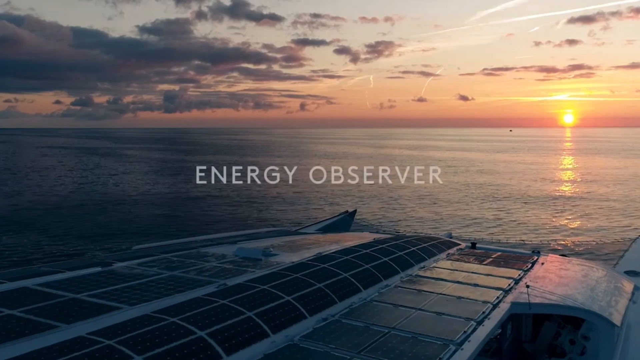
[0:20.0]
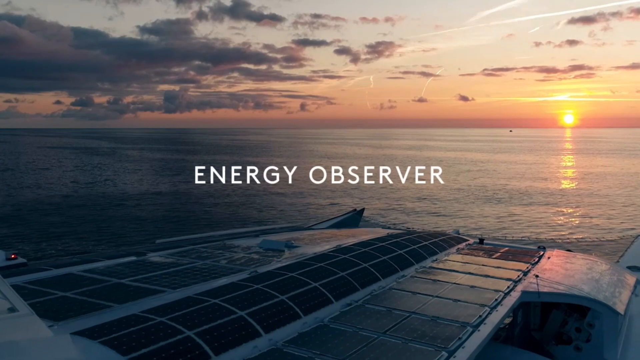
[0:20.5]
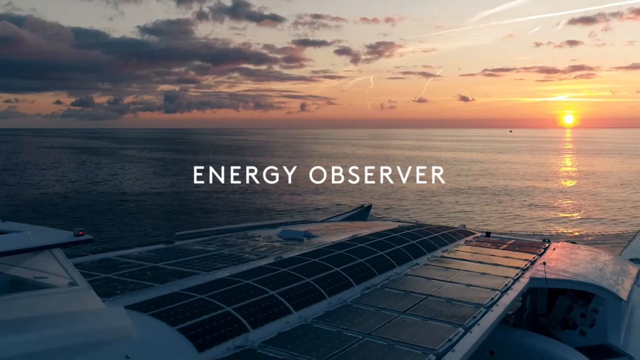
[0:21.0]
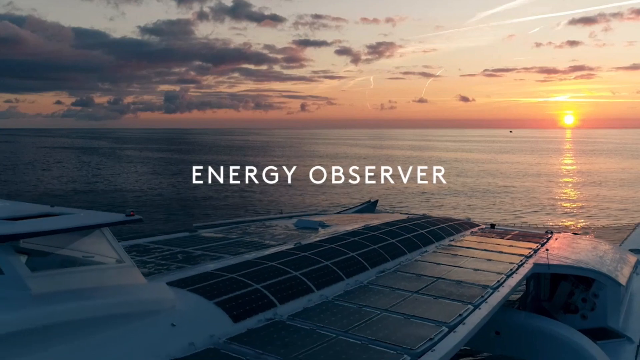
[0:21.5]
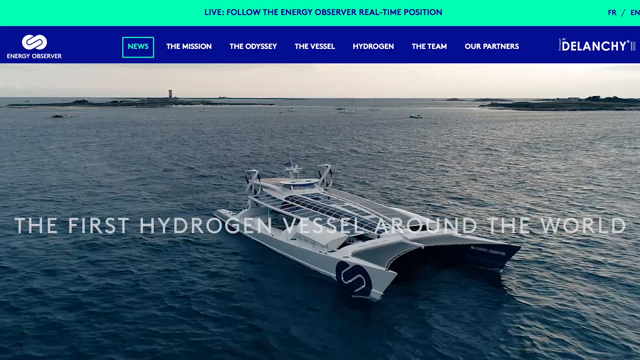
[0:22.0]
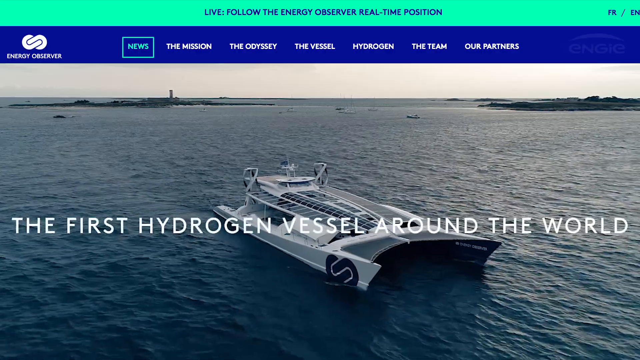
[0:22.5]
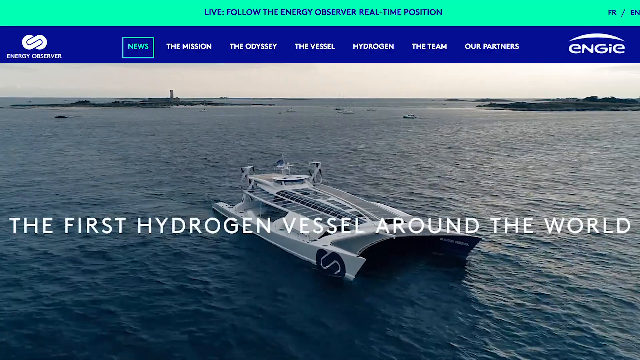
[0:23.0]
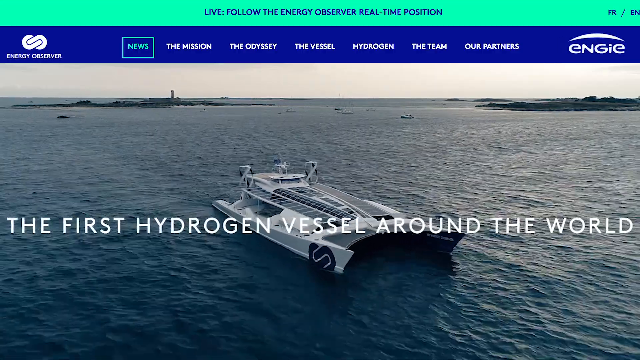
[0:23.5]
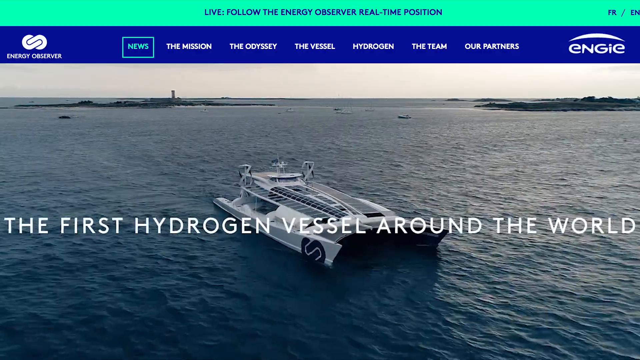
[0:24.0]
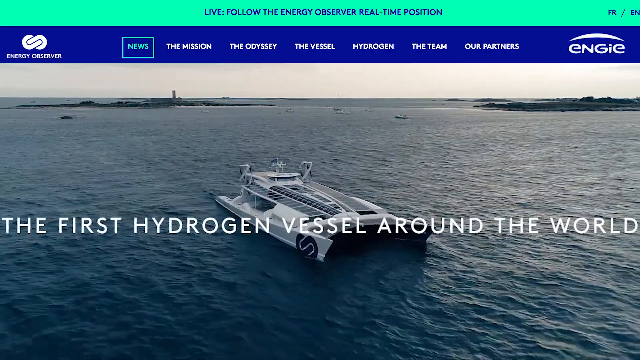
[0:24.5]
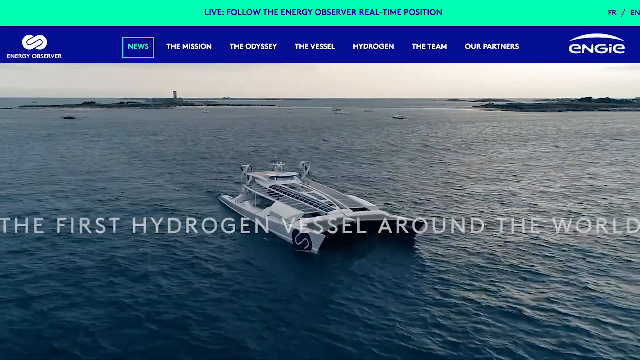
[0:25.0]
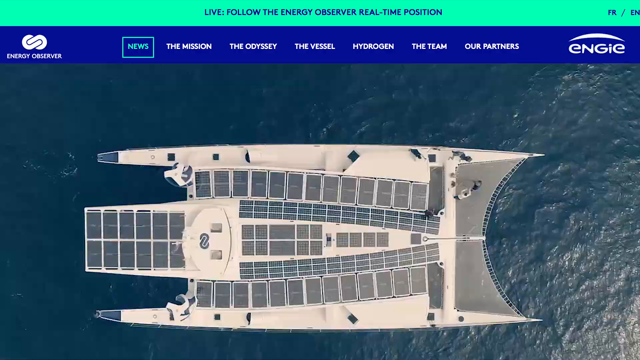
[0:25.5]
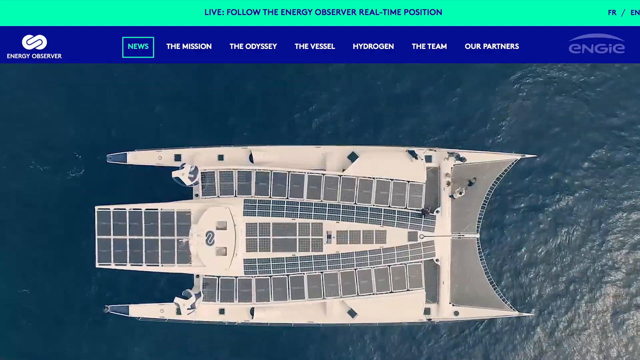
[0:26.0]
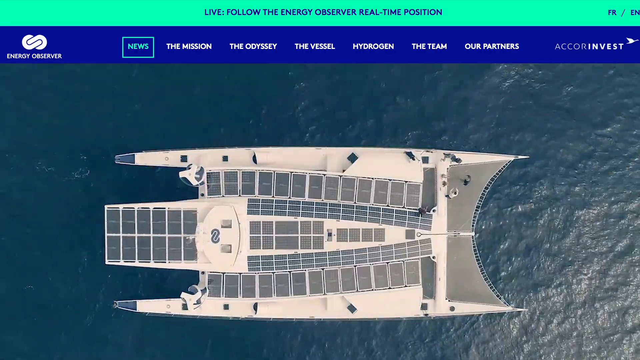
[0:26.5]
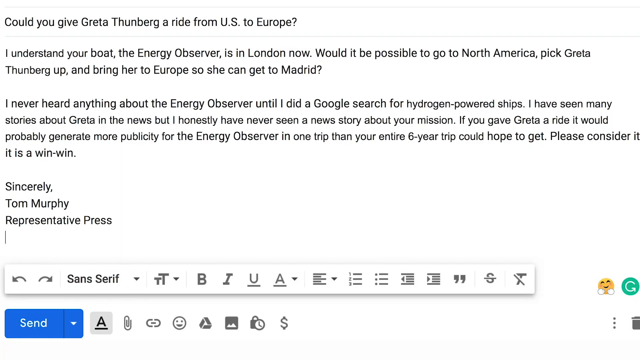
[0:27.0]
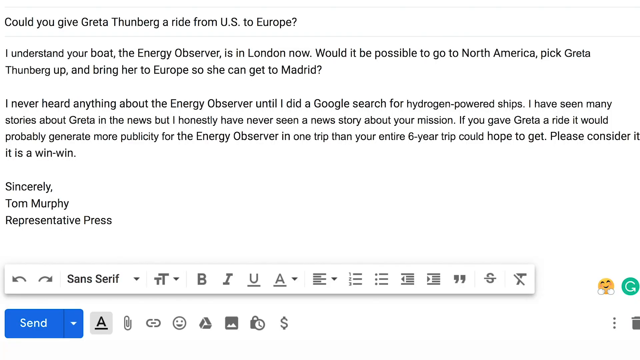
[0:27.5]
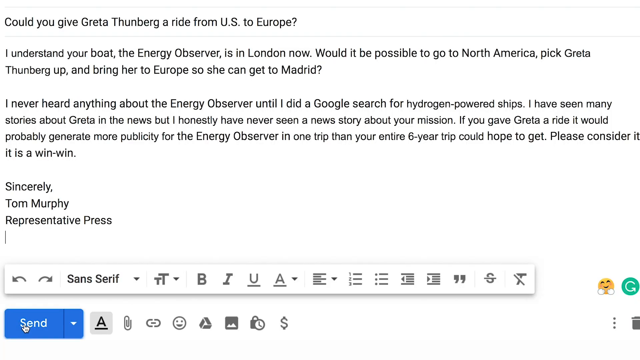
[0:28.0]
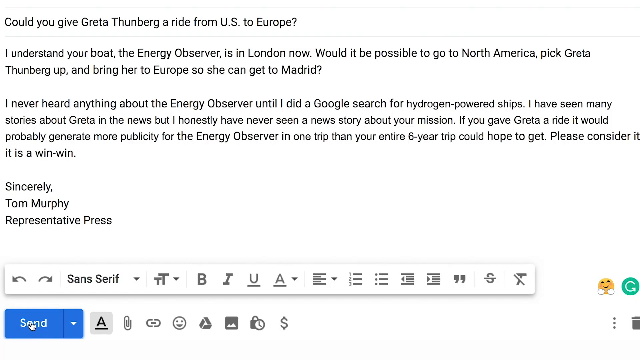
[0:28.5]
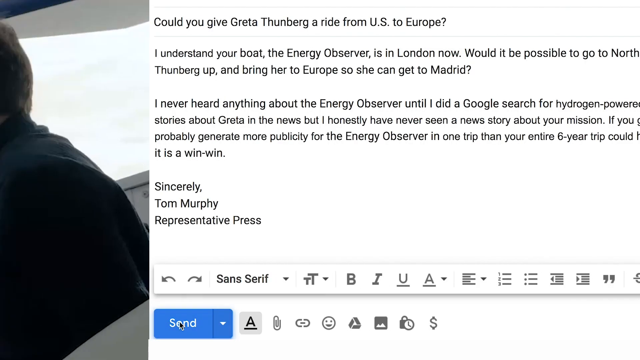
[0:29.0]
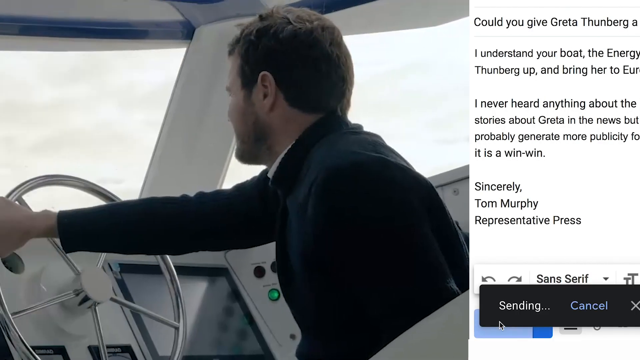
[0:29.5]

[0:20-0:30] An image shows the Energy Observer out on the water, with the sun setting in the background on the left. The vessel, some sort of solar-powered boat, moves from left to right. Another image shows the same vessel, described as the first hydrogen vessel around the world, on the surface of the water coming towards the camera, with "the Energy Observer" at the top; this comes from the Energy Observer website. An overhead view follows, a kind of drone shot looking down at the boat. A piece of text asks about giving her a ride to Europe, suggesting she is apparently looking for a ride on this boat.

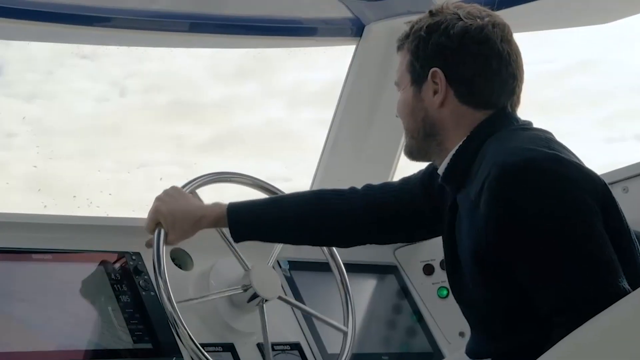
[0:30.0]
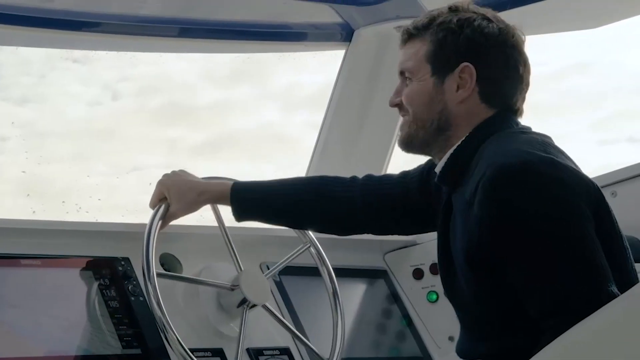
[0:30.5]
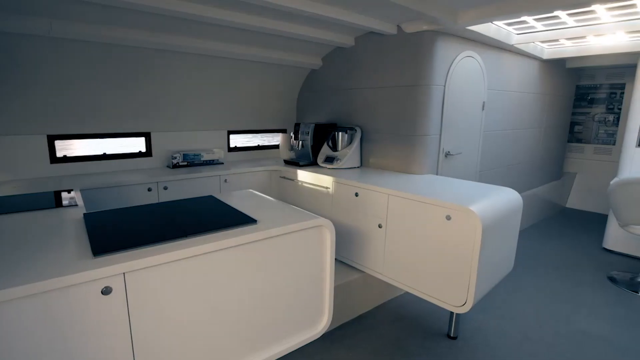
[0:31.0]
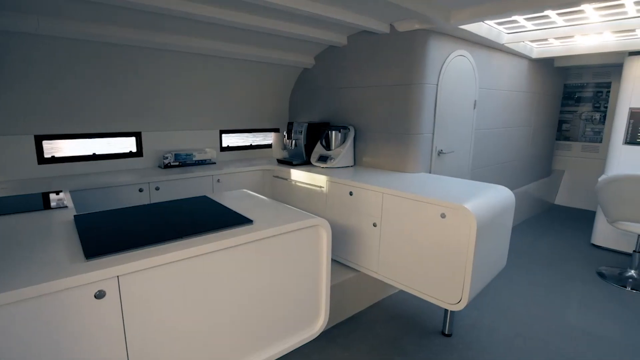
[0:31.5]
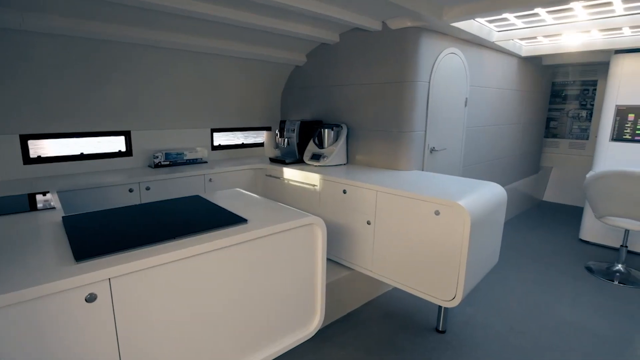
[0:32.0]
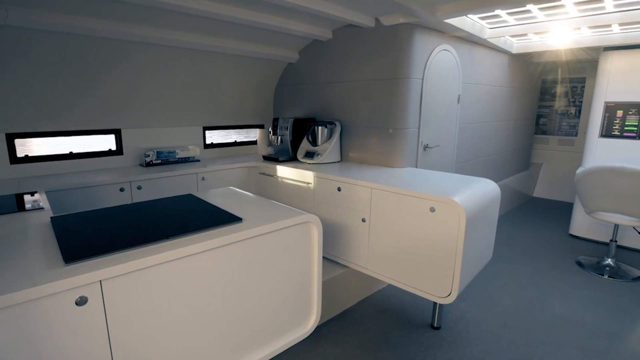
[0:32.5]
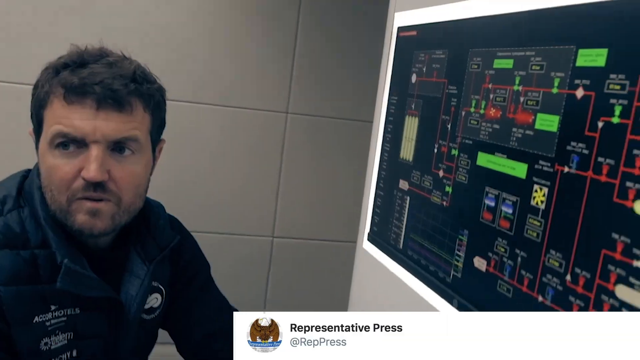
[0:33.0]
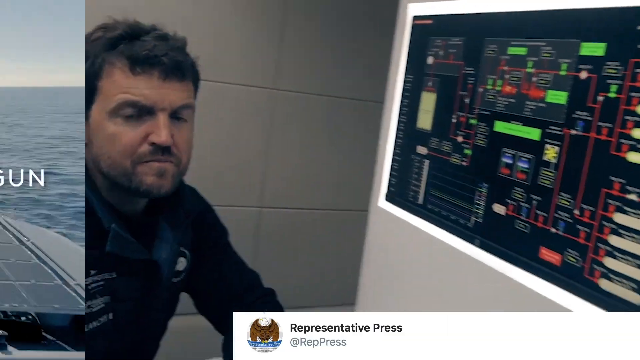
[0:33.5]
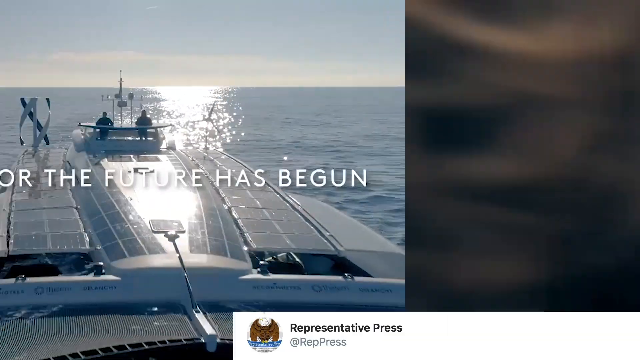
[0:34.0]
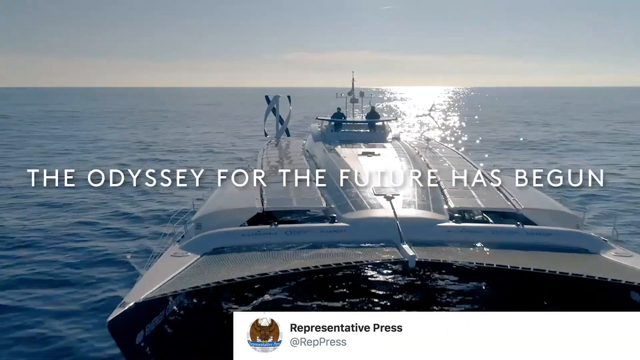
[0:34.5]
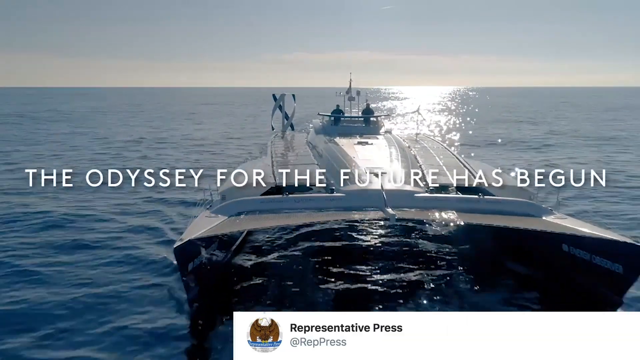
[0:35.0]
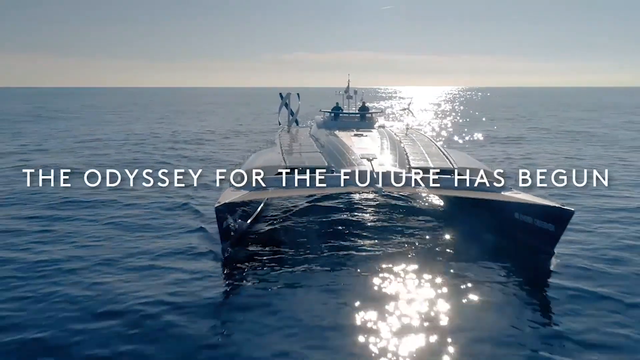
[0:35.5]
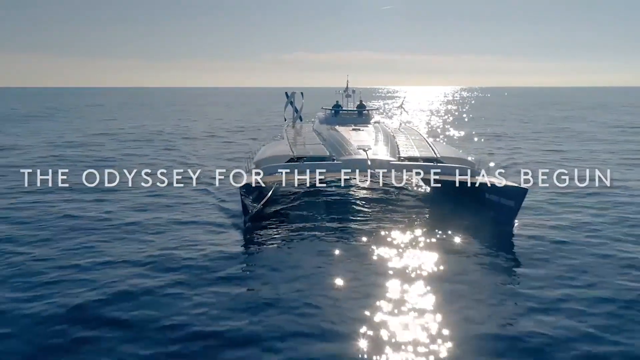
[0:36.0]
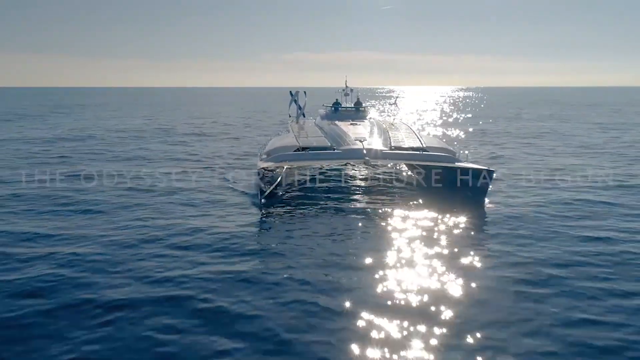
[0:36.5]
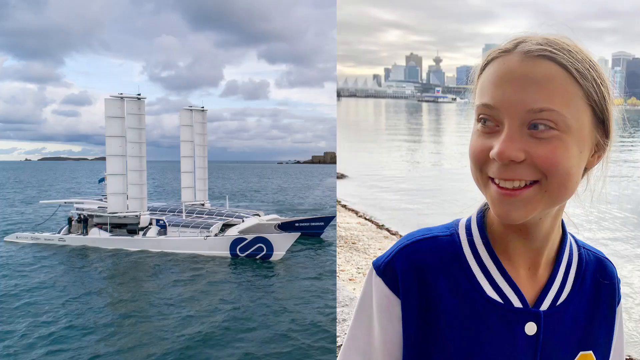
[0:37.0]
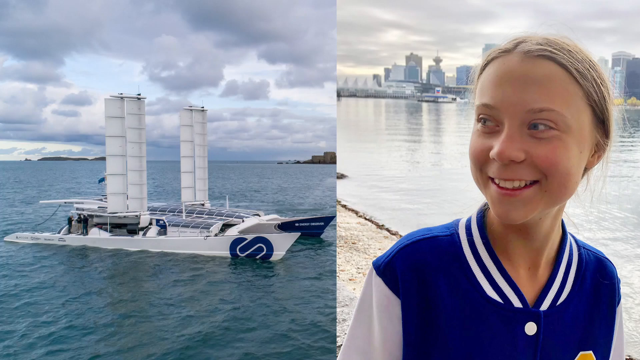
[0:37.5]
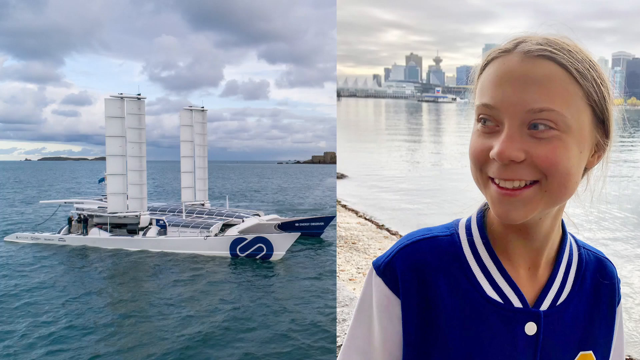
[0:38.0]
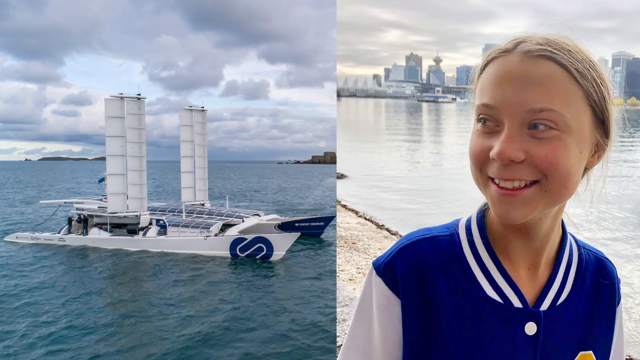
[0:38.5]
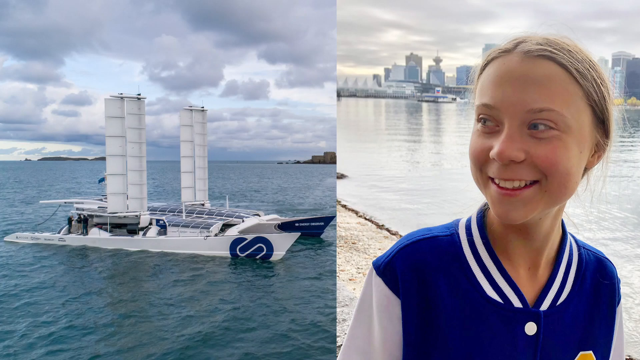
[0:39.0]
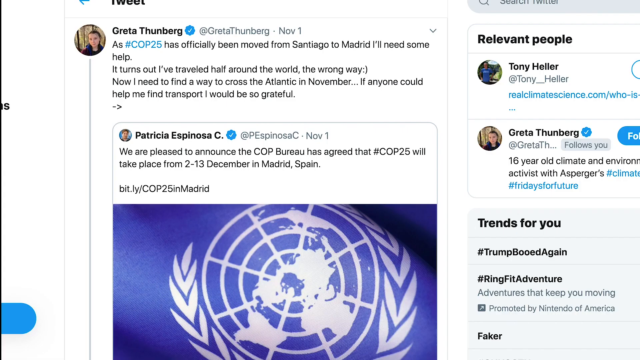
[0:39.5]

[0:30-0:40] A man stands at the helm of the boat with his right arm on the steering wheel. The video cuts to an interior shot of the boat in somewhat drab white and gray colors as the camera pans from left to right. Some sort of engineer is shown in front of a complicated screen that probably shows the internals of the boat's engine. Another image of the boat on the water carries the text "the odyssey of the future has begun," and the camera kind of pulls away from the boat. The video then moves to a split screen with the boat on the left and credits on the right.